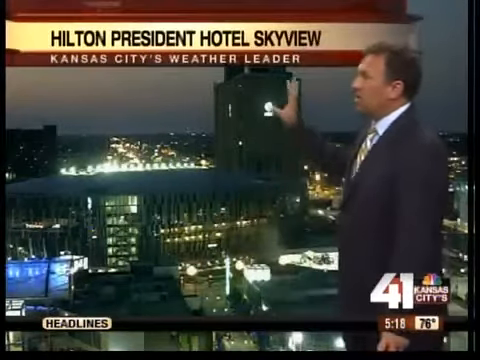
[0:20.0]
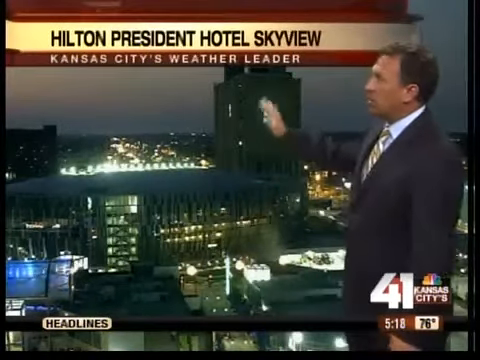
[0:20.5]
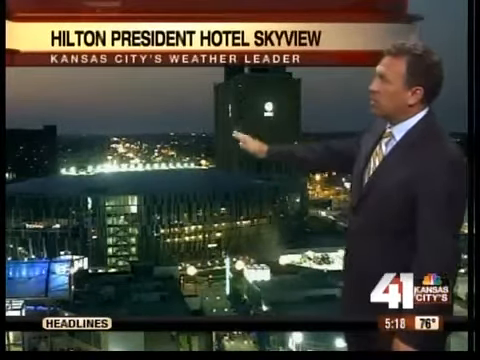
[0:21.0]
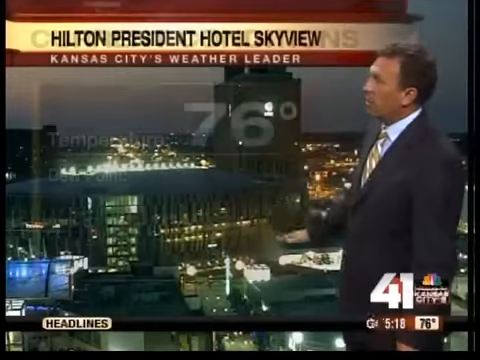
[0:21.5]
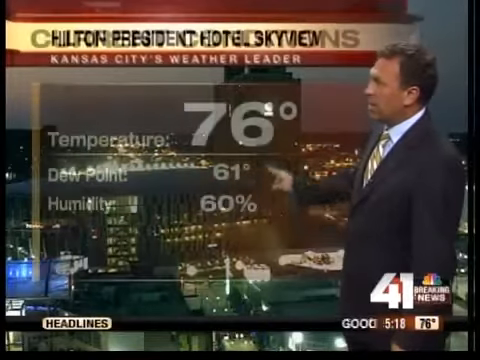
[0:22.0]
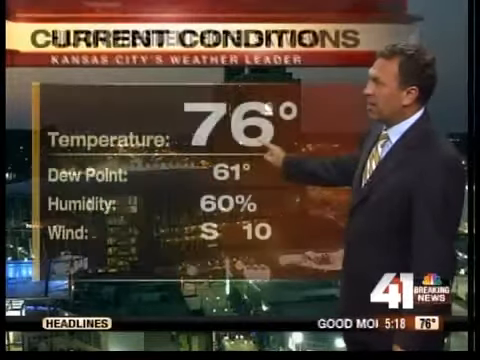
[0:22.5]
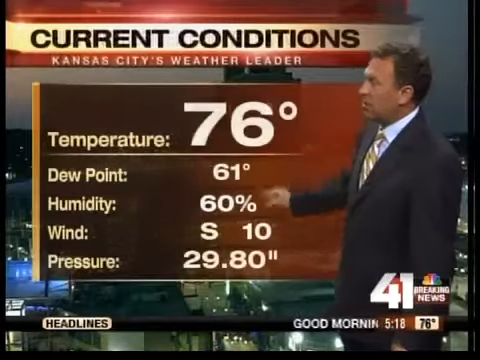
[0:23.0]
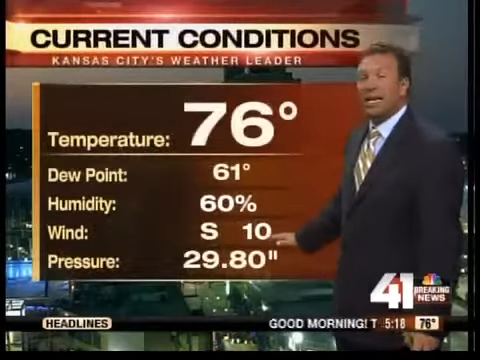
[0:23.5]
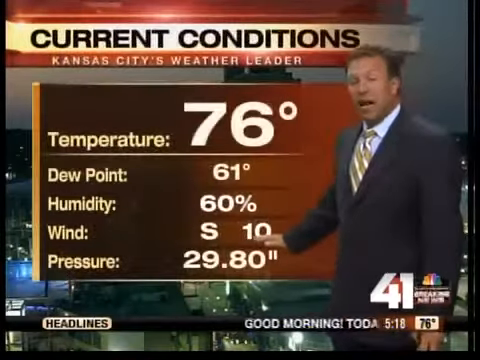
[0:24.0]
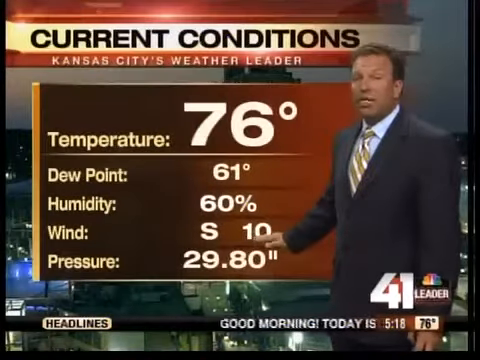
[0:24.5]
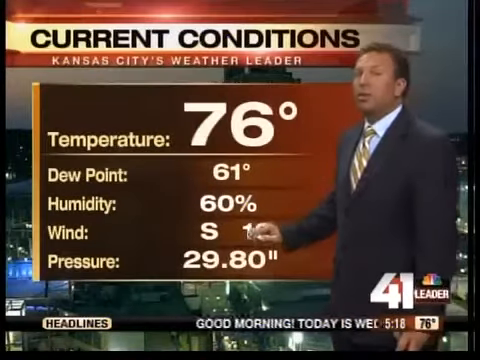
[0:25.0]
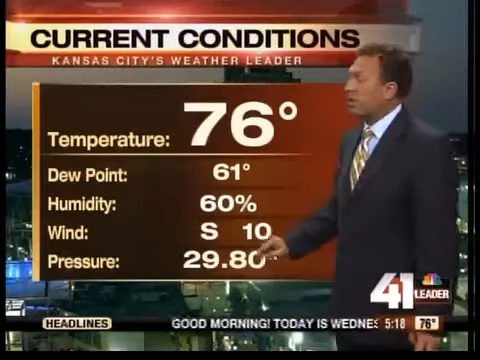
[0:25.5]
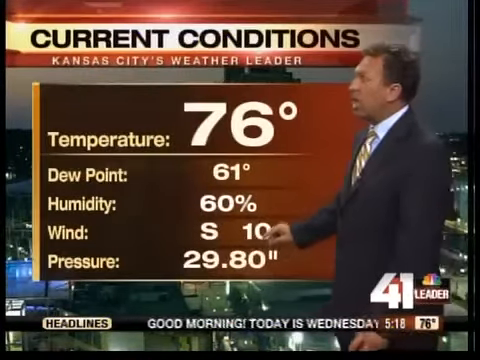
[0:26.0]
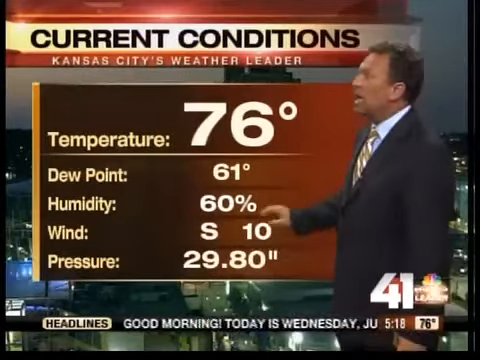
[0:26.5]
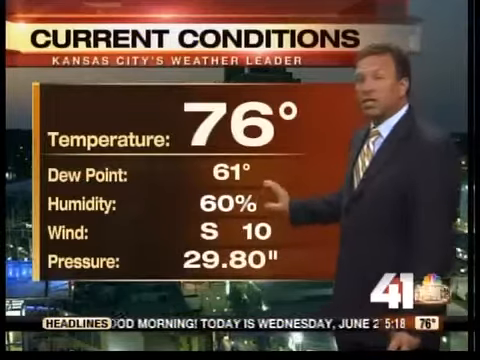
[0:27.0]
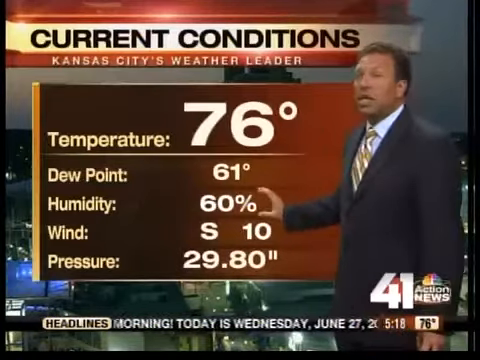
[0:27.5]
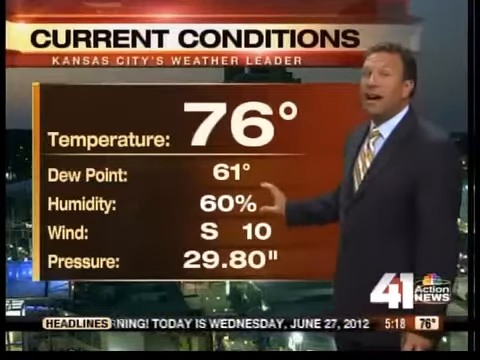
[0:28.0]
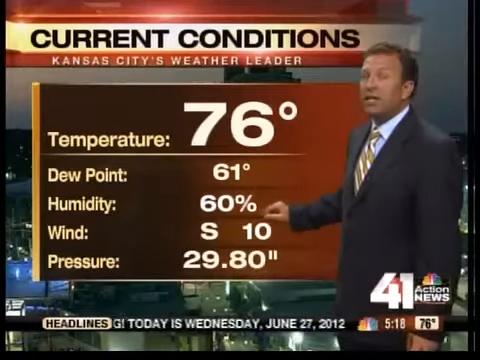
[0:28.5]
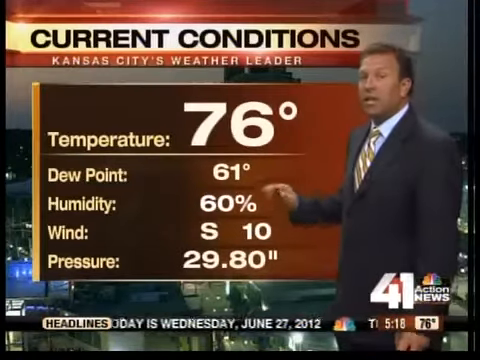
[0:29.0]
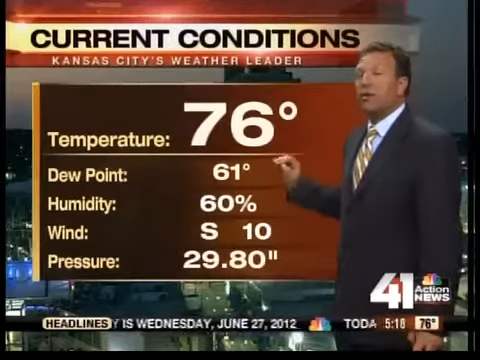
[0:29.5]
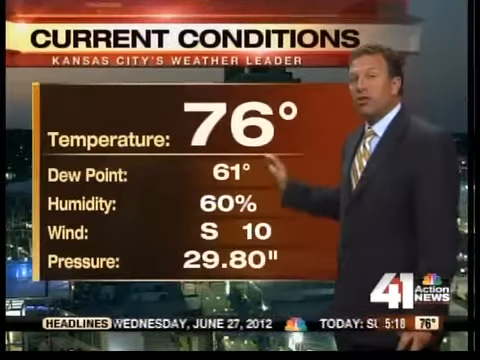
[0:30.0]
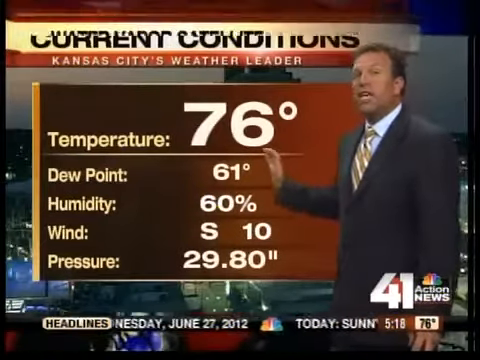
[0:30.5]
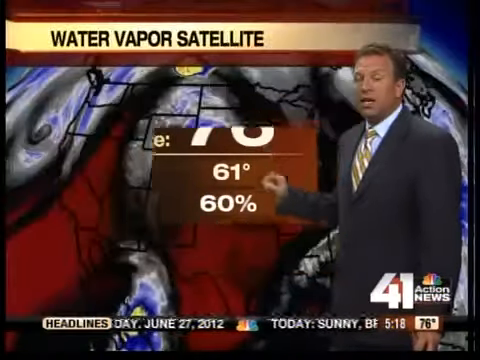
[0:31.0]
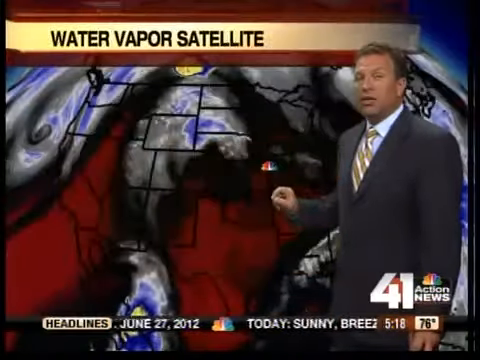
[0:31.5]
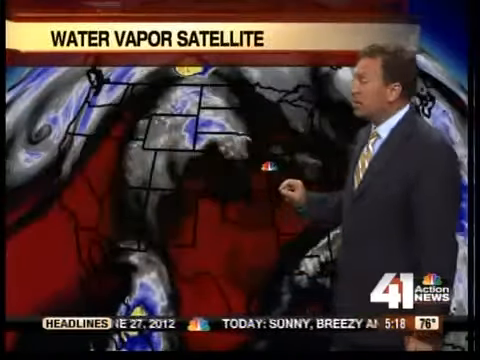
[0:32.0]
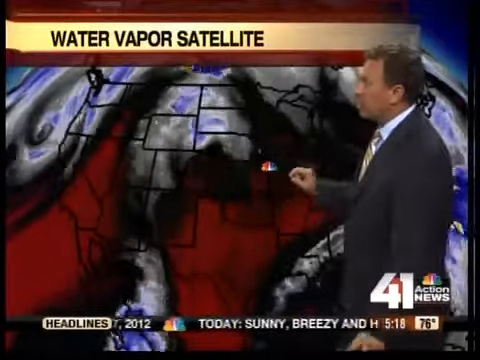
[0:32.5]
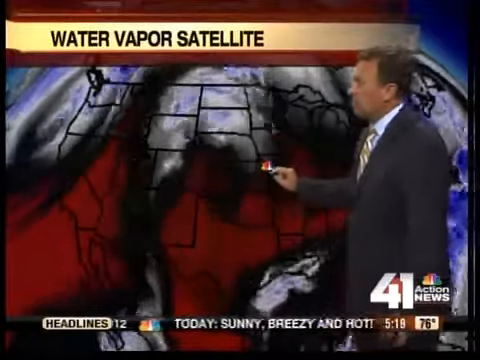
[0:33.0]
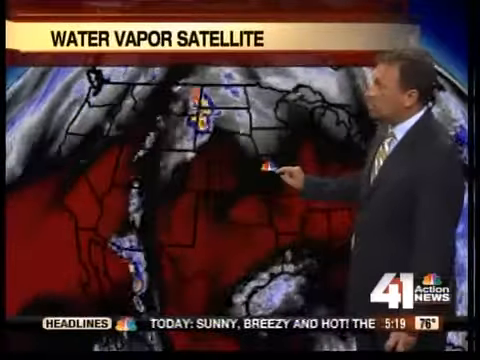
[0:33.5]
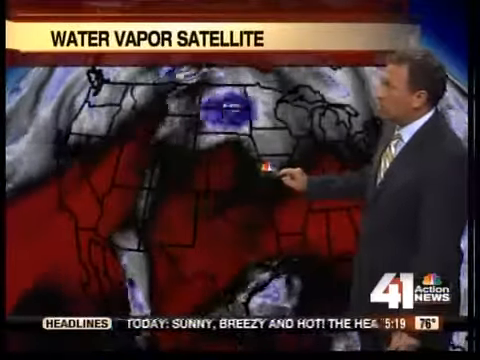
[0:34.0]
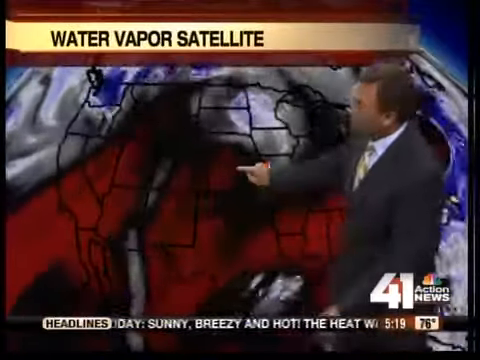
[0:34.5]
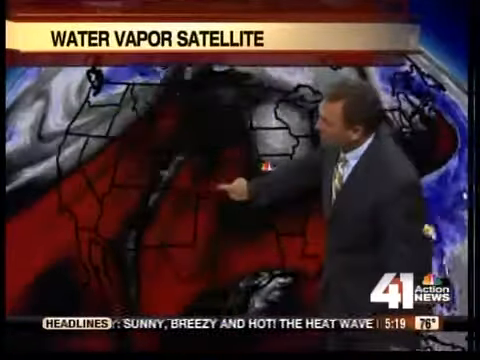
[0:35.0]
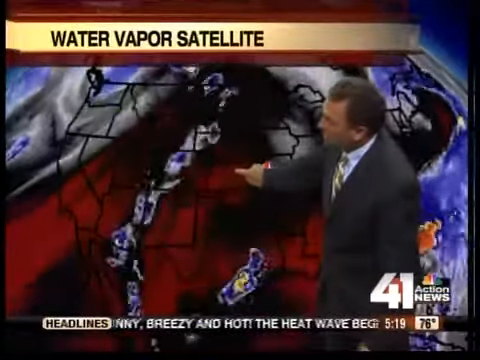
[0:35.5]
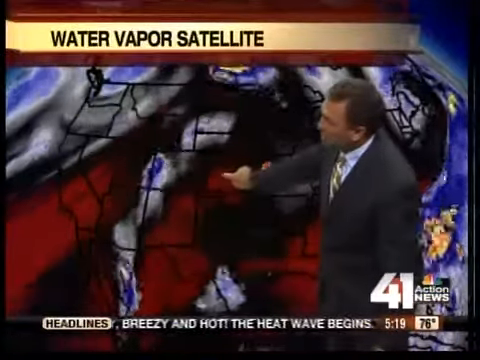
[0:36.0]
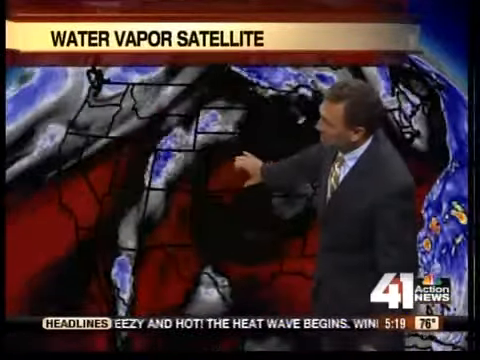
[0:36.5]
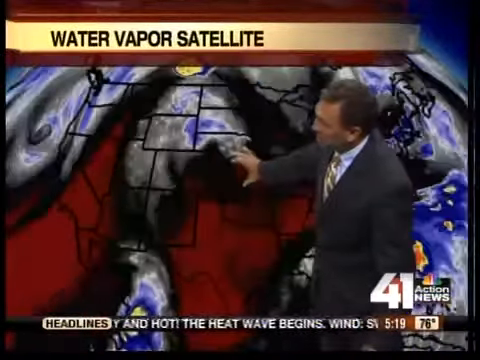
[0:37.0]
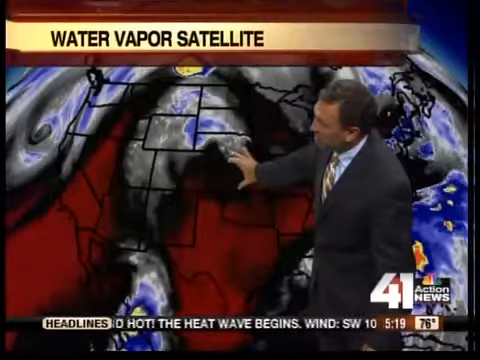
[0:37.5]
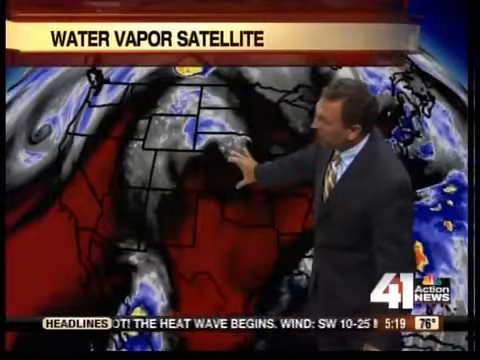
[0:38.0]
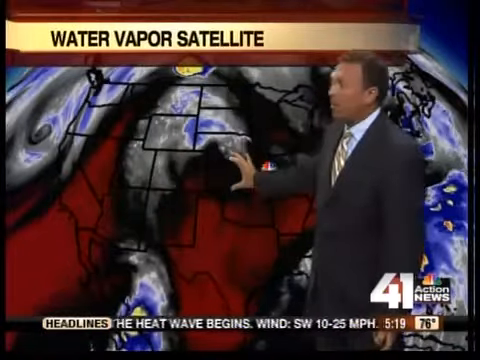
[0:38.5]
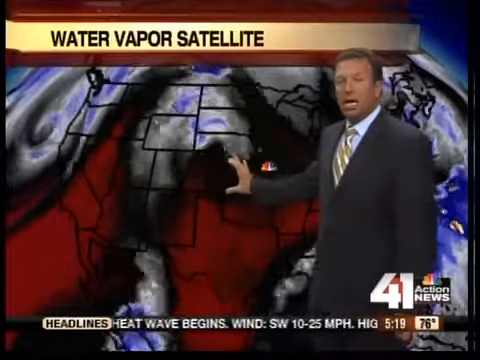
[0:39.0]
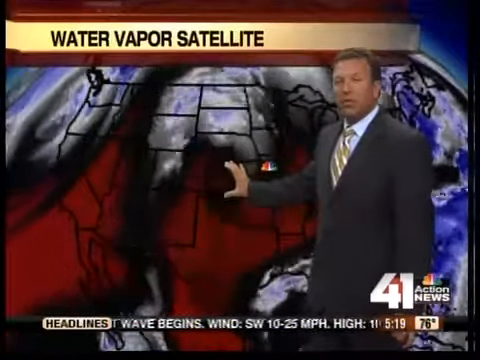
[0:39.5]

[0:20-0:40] The anchor stands on the right side of the screen, facing toward the left. Behind him is what looks like a city skyline, with a tall building in the upper center right of the screen. His right hand comes out and he points to the tall building in the background. A box of text appears showing the temperature, dew point, humidity, wind and pressure for that area, reading "76", "humidity 60%", "wind south 10" and "pressure 29.80 inches." The man gestures to the pressure reading of 29.80 at the bottom, then makes a C-shape with his right hand and puts it around the 60% humidity. He does the same with the dew point of 61, and the box then shrinks down to the middle and disappears. The video cuts to a large weather map of the entire United States.